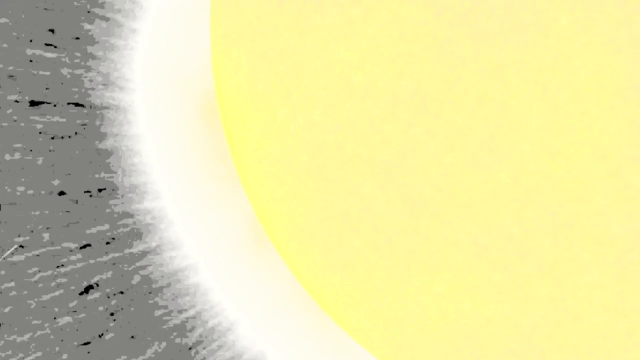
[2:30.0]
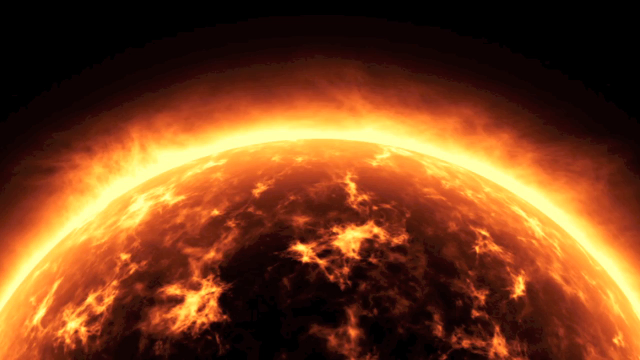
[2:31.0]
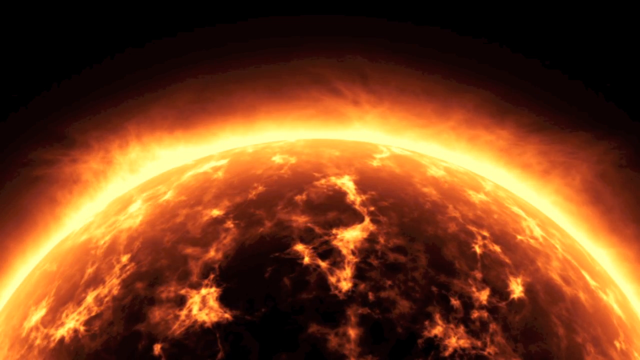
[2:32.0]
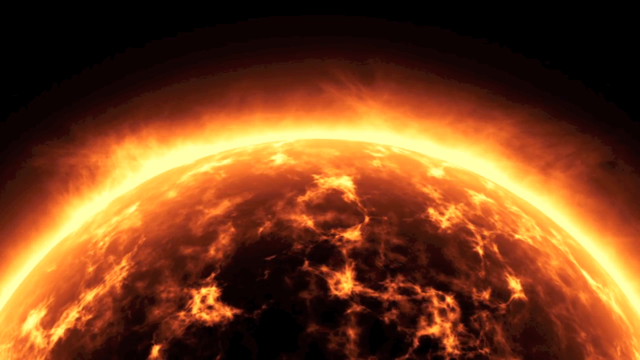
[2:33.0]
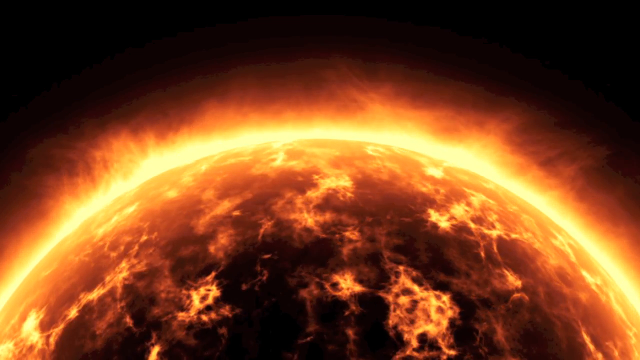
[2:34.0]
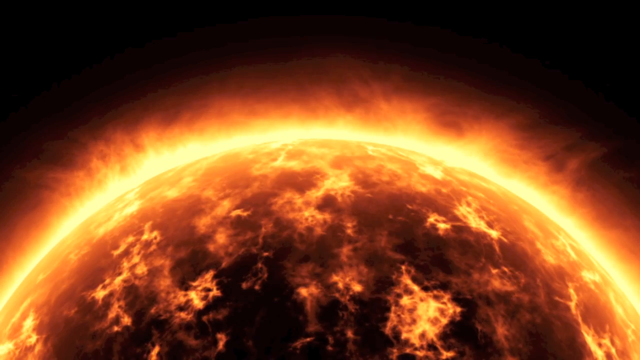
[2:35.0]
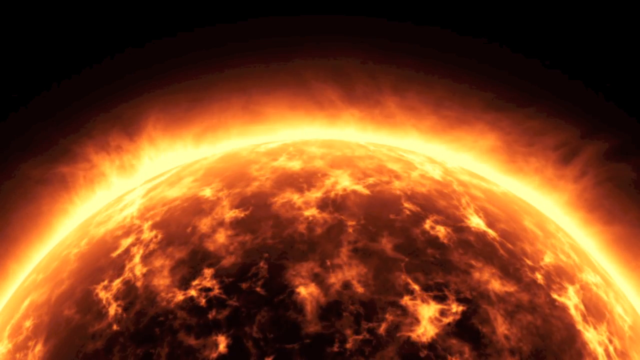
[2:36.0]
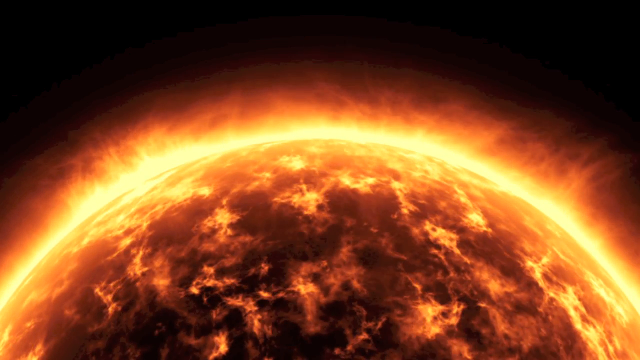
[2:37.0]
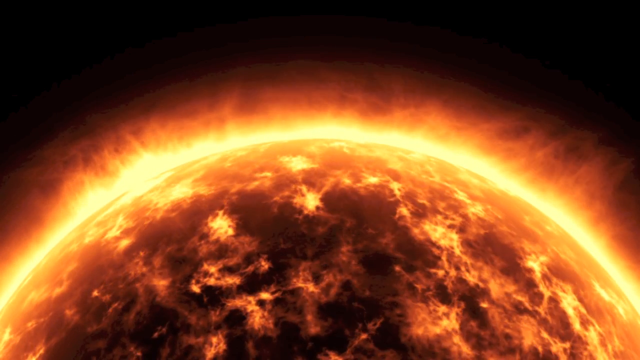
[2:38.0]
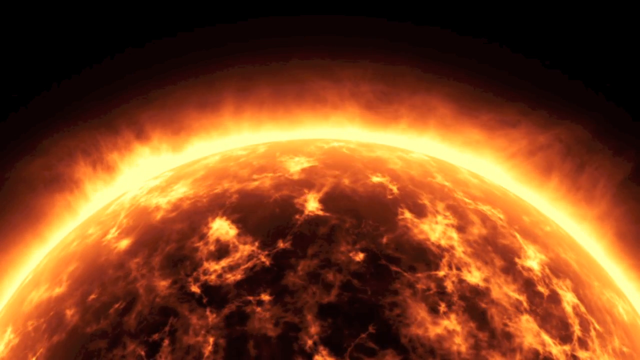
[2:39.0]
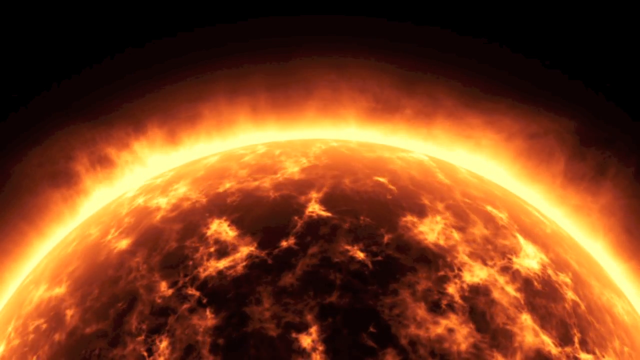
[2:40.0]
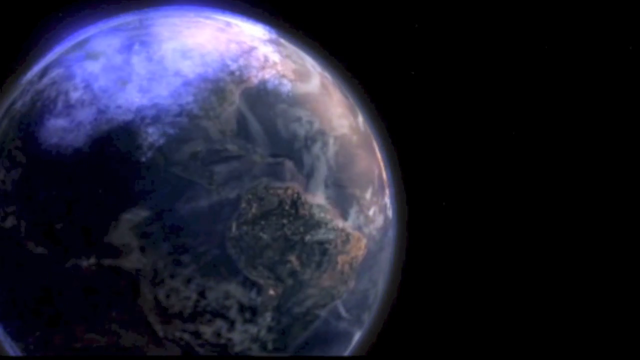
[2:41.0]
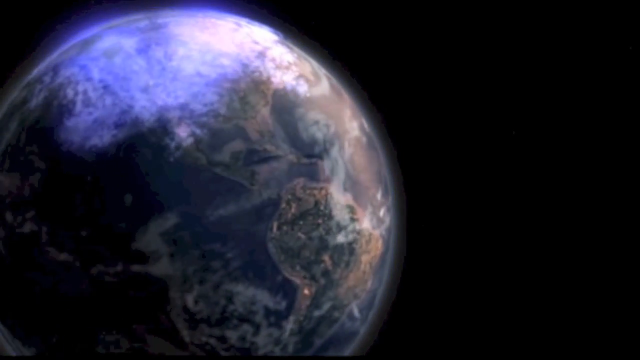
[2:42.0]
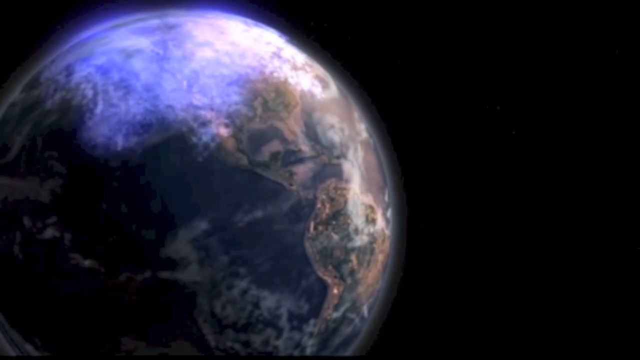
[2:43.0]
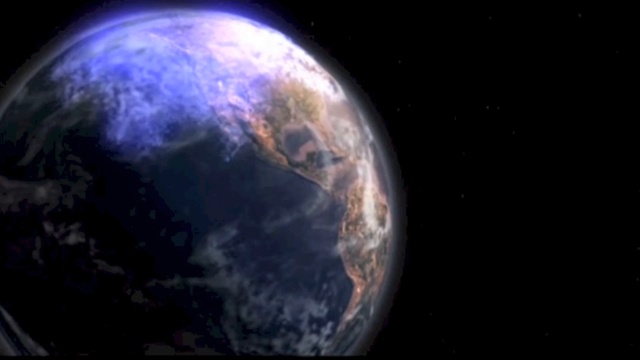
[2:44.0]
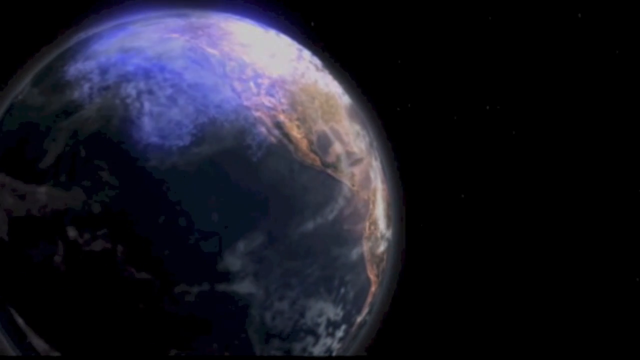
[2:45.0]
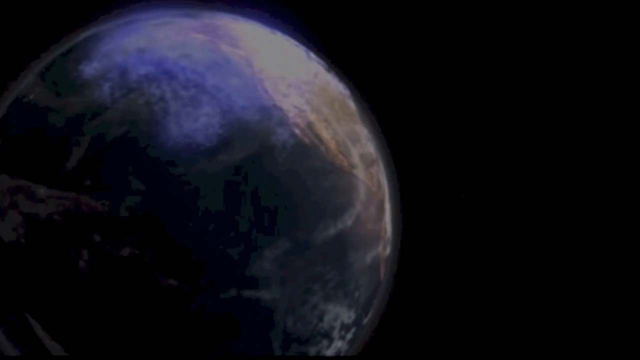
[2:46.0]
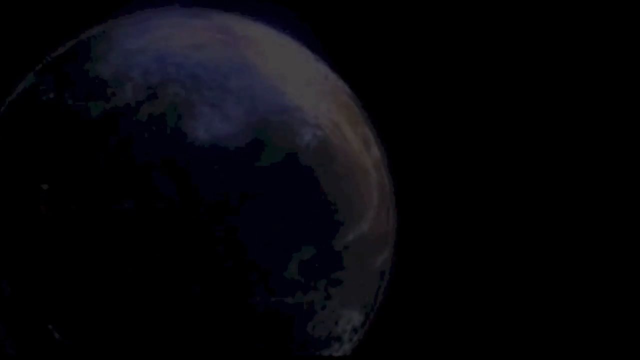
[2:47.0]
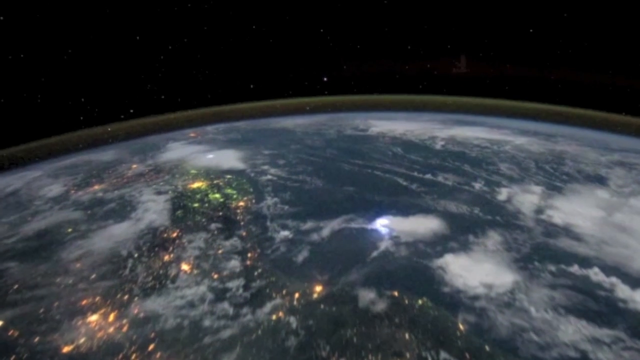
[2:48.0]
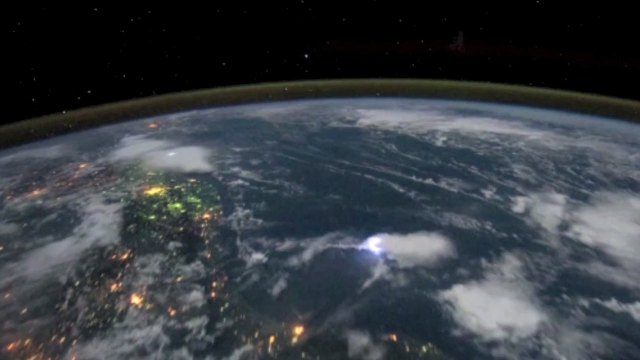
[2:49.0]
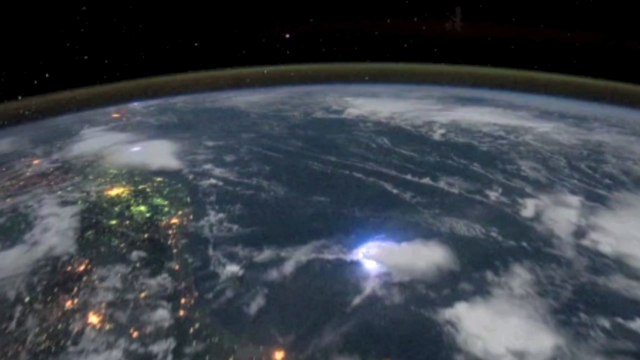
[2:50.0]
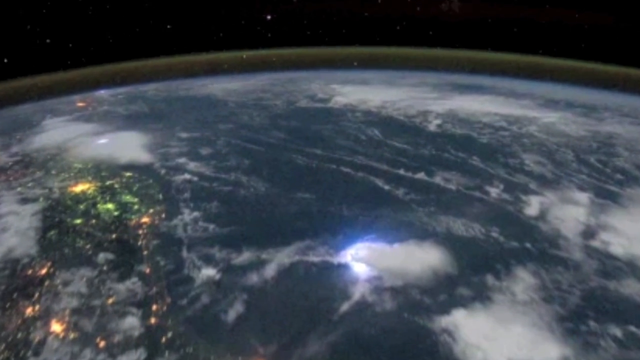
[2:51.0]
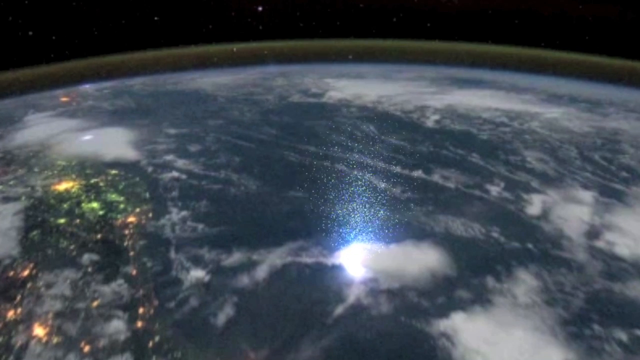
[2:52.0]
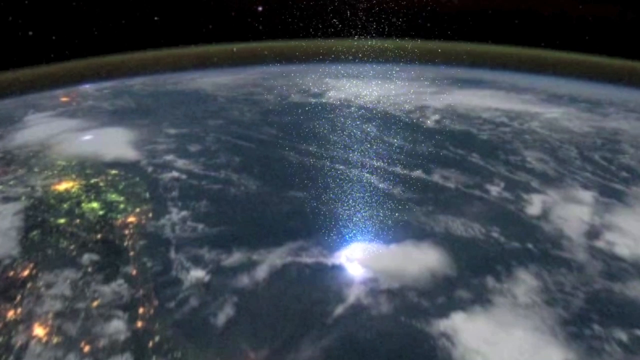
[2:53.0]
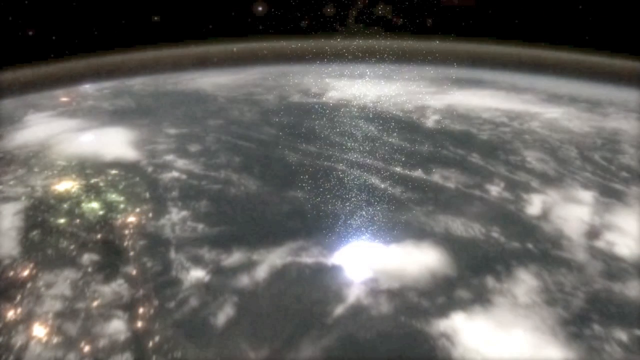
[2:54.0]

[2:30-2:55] The view is zoomed in on a large yellow sun, with a white beam coming from its side that pulsates again and again. It cuts to a half view of the sun, covered with various black and orange flames and a sort of orange mist coming off the top. Next comes a 3D rendition of the planet Earth spinning from left to right, occupying the left side of the screen while the right side is completely black; Earth slowly fades to black. It then cuts to a top-down view of Earth that looks more realistic, as seen from space, with multiple storm clouds with lightning and landmasses covered with yellow lights. The camera zooms in, revealing a fine mist coming off Earth that is its atmosphere, and continues zooming into one of the storm clouds and its lightning. A white burst of 3D-rendered dots comes from the lightning, spreading upward in a conical shape. The image slowly turns gray until it ends.